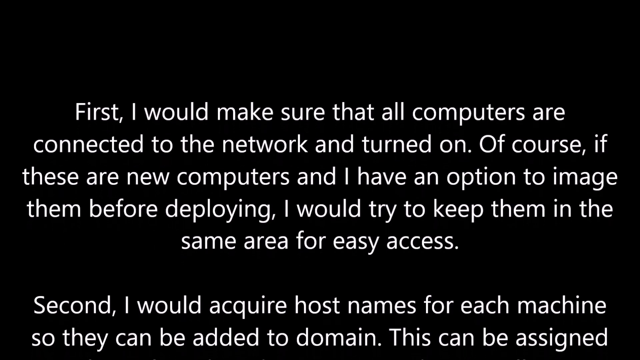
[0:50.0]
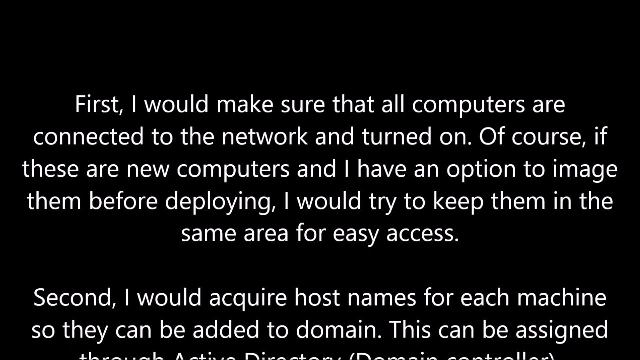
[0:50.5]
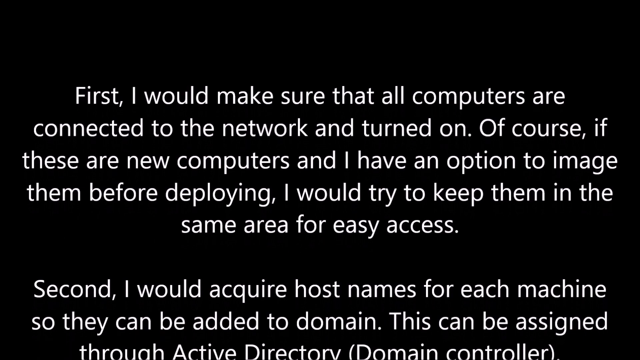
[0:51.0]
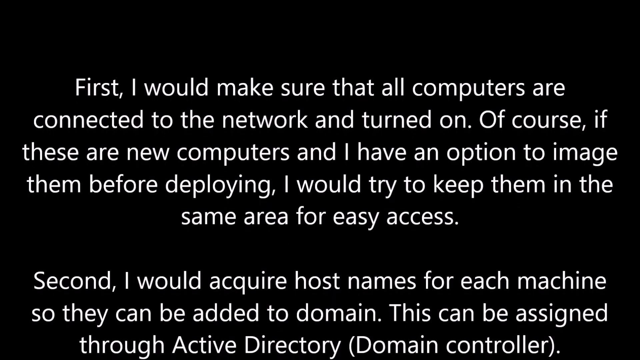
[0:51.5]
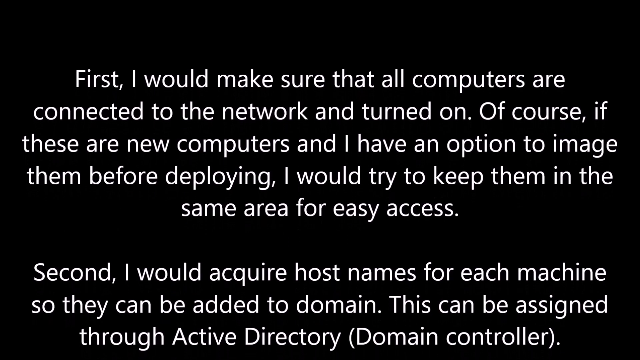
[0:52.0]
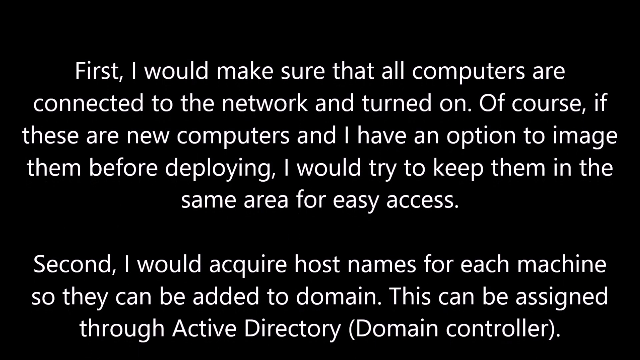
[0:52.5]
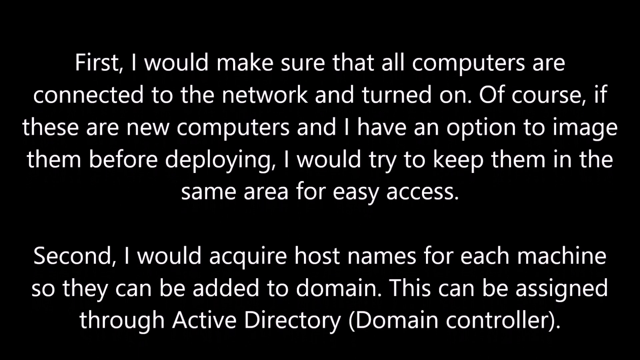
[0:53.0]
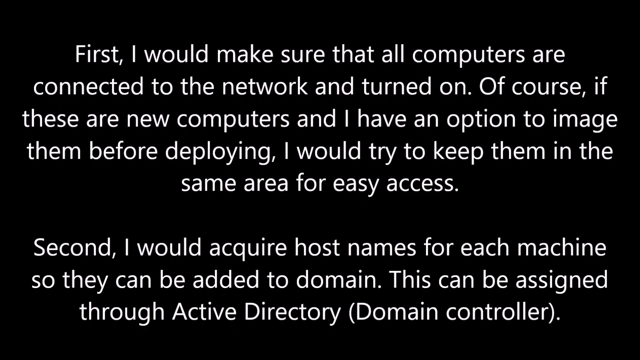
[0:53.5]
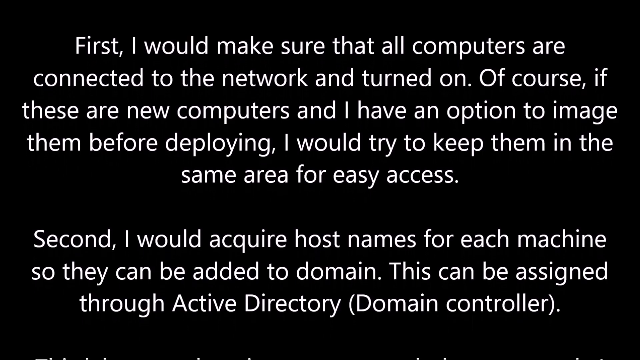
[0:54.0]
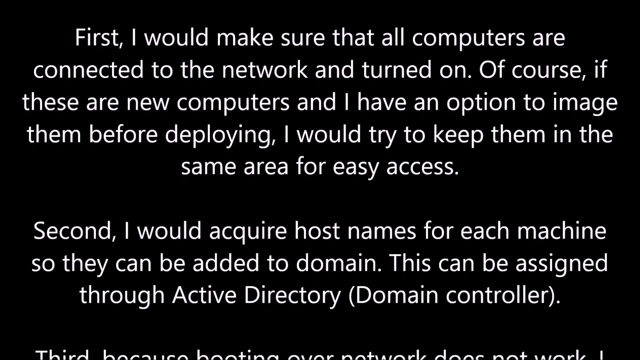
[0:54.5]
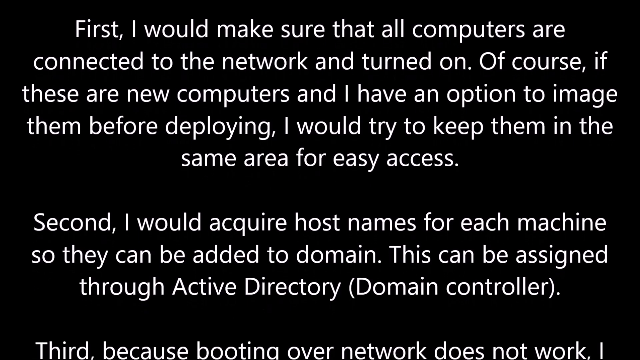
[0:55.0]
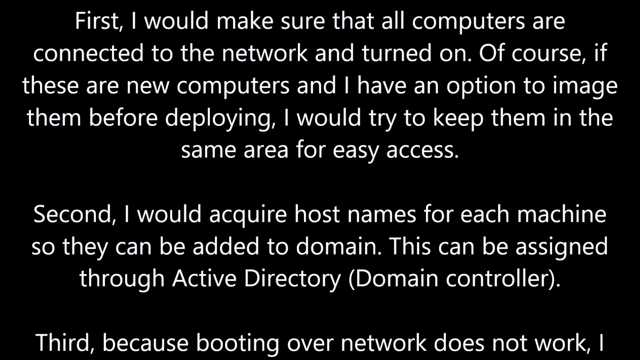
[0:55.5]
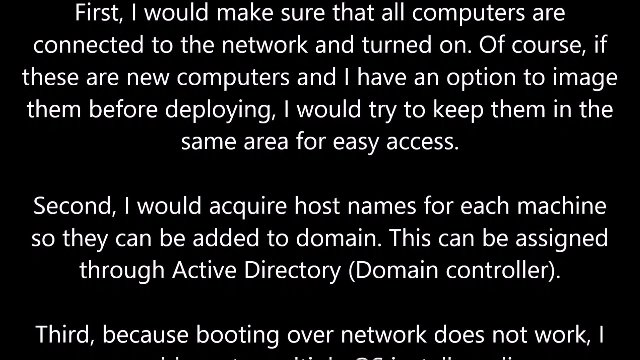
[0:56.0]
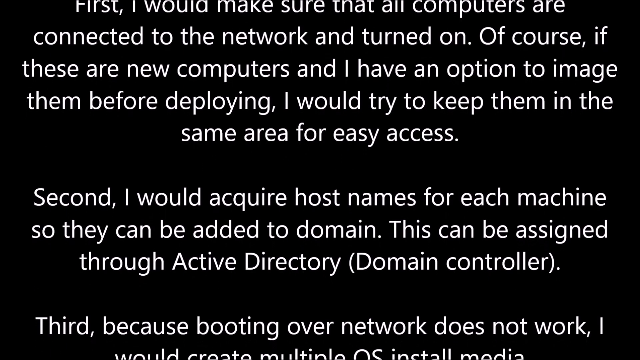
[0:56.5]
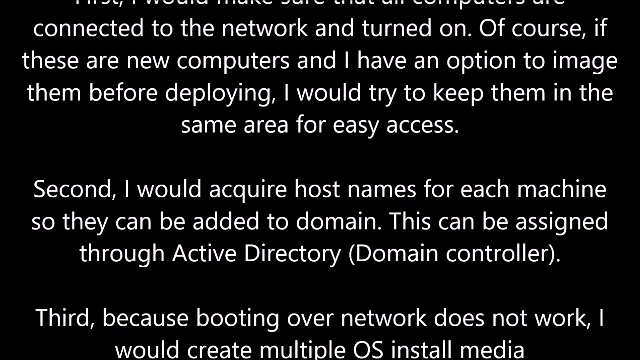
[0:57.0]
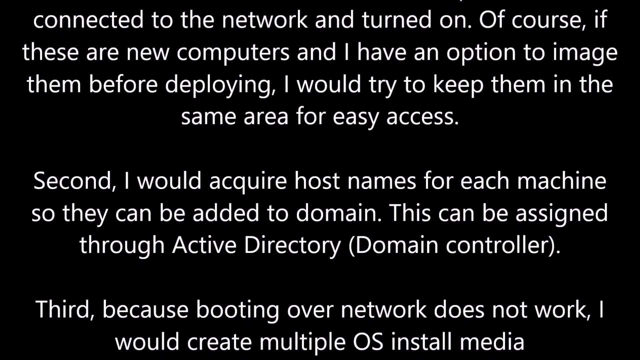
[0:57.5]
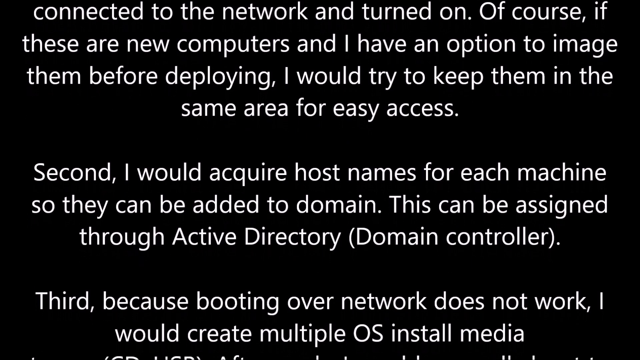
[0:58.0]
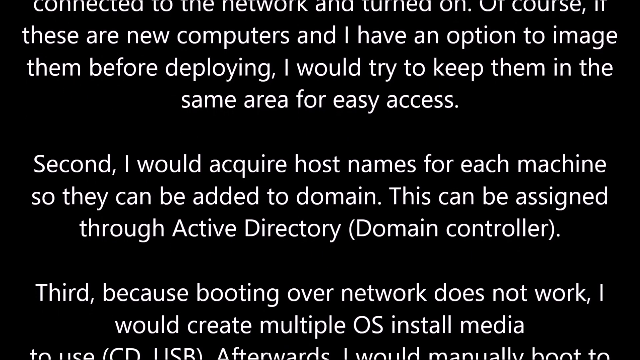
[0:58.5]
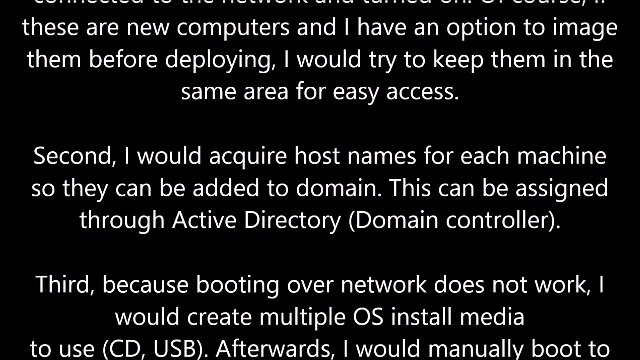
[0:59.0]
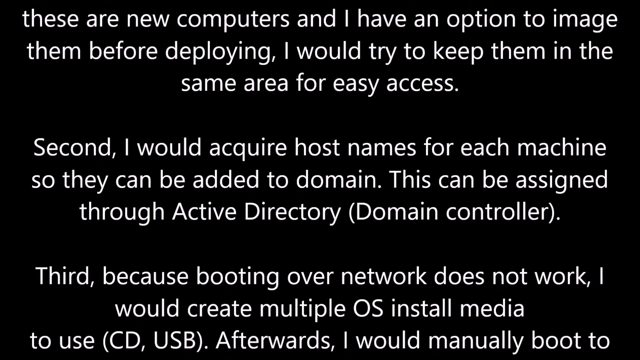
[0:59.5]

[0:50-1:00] White text scrolls slowly upwards from the bottom, answering a question about how to install an OS on a lot of computers. It states that it would "first make sure all computers are connected to the network and turned on. Of course, if these are new computers and I have an option to image them before deploying, I would try to keep them in the same area for easy access." As the text scrolls up, a second point is revealed: "Second, I would acquire hostnames for each machine so they can be added to domain. This can be assigned through Active Directory (Domain Controller)." Toward the end, a third point is partially revealed, reading "Third, because booting over network does not work I would create multiple OS install media," before the text is cut off.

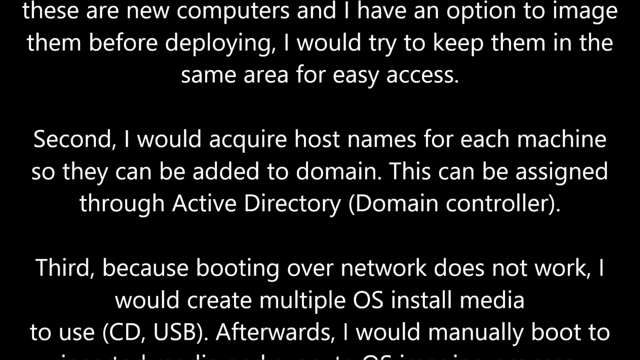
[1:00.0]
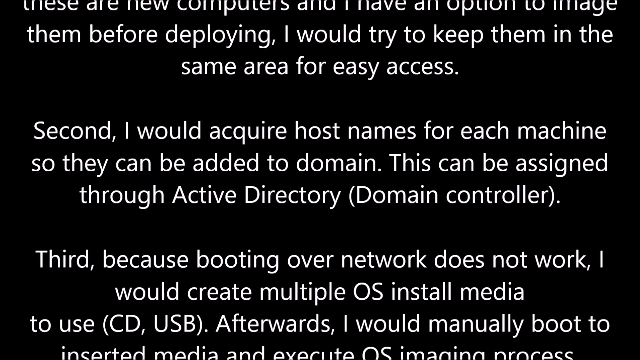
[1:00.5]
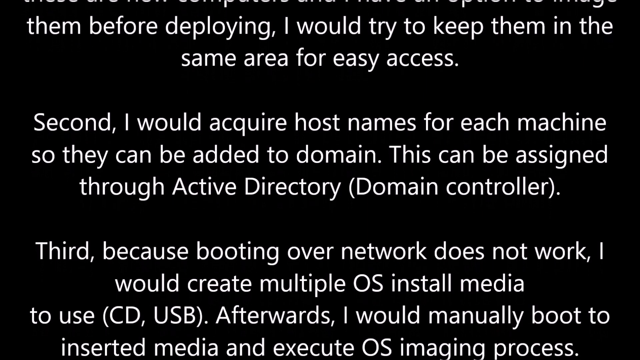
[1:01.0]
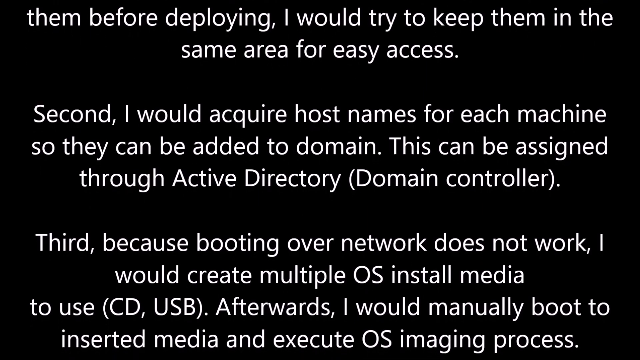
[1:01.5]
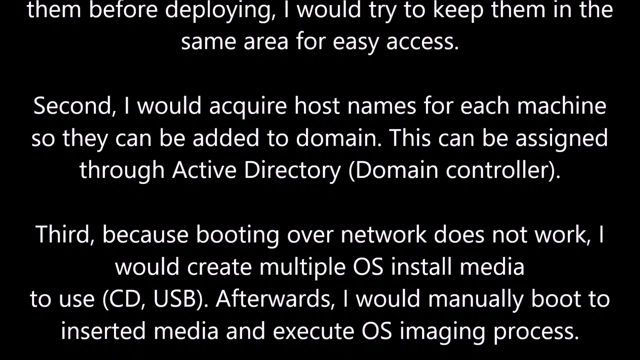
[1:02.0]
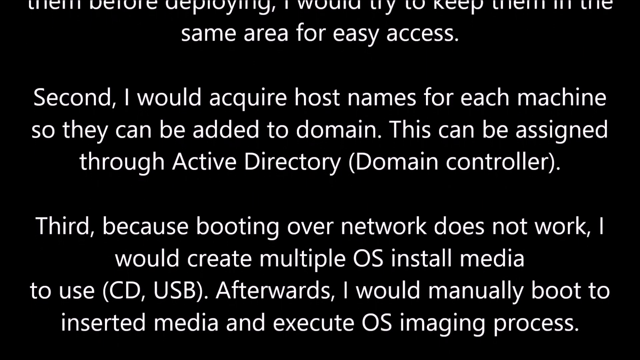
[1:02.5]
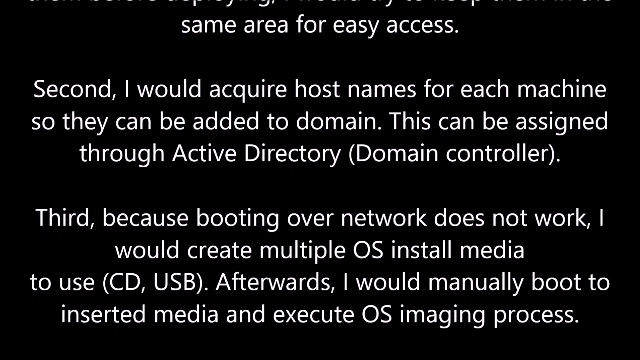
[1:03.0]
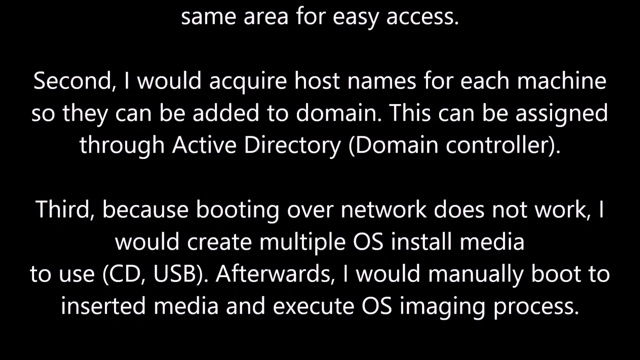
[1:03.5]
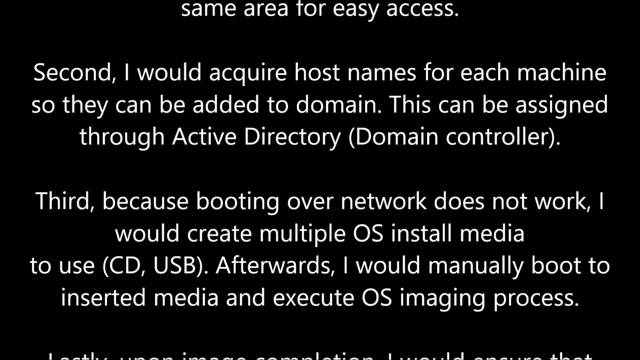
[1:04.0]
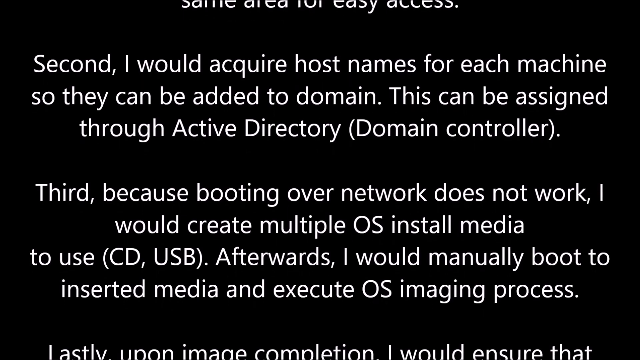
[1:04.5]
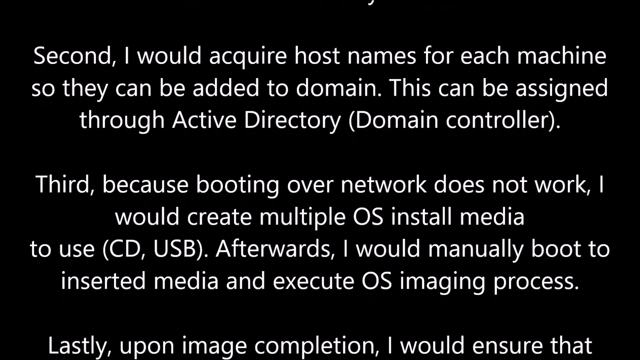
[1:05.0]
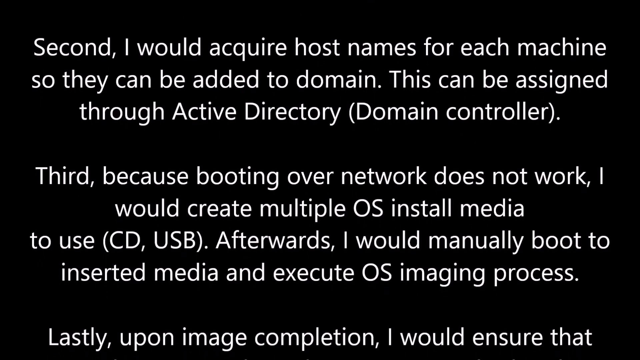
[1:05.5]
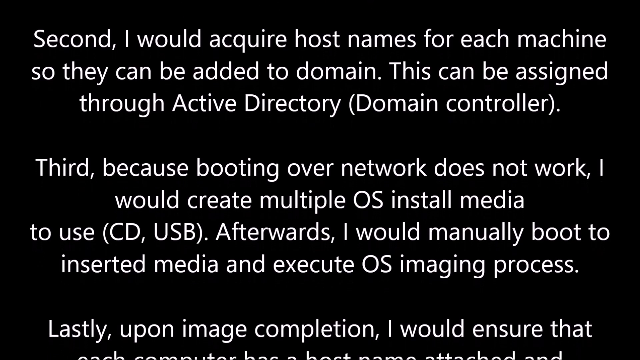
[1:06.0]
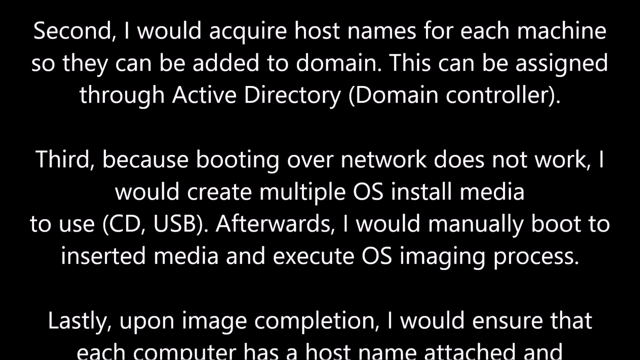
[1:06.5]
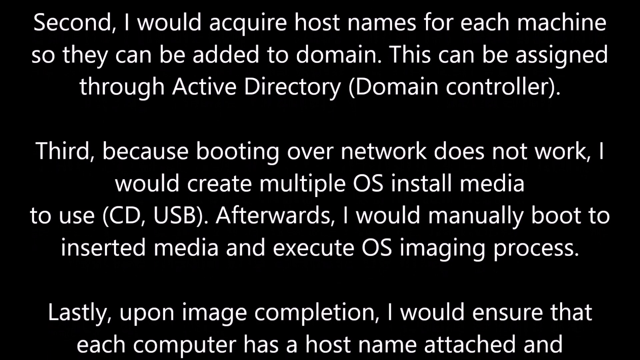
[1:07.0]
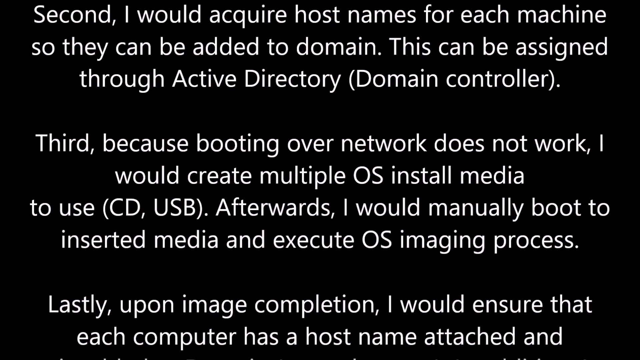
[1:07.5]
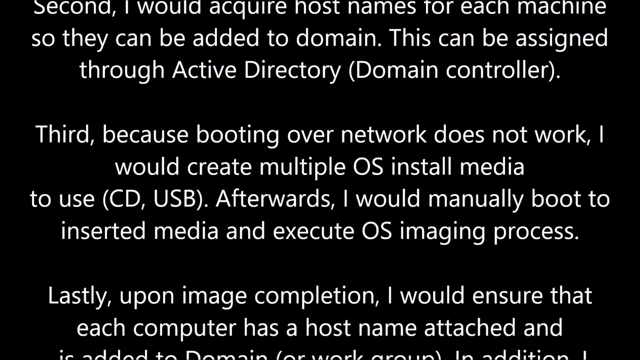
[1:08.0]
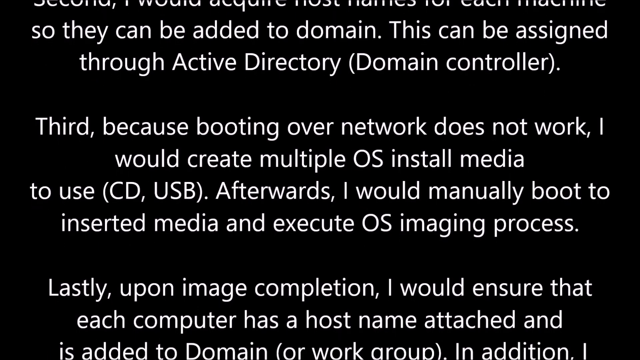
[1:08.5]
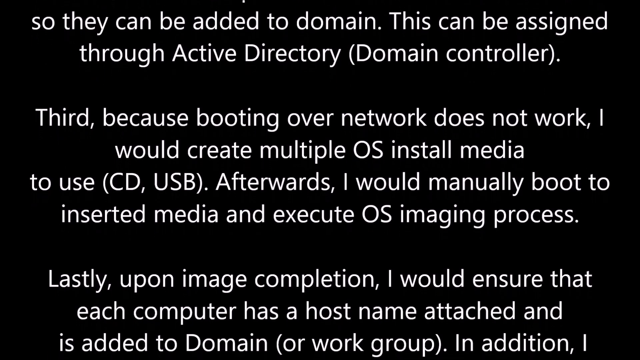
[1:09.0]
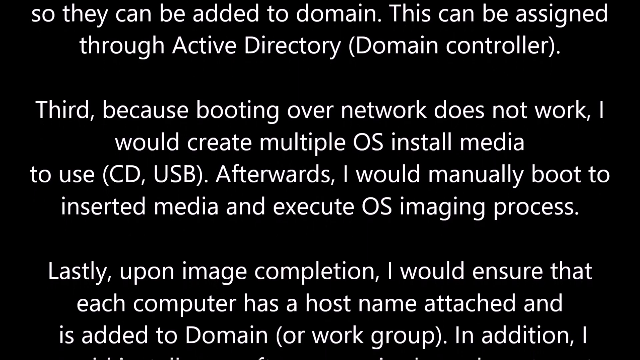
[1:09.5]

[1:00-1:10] Text in a plain white font scrolls slowly upwards from the bottom of the screen against a black background. Partial text reads "Then, before deploying, I would try to keep them in the same area for easy access." After a space, a second short paragraph reads "Second, I would acquire host names for each machine so they can be added to domain. This can be assigned through the Active Directory (Domain controller)." The text continues to scroll, revealing a third full short paragraph: "Third, because booting over network does not work, I would create multiple OS install media to use (CD,USB). Afterwards, I would manually boot to inserted media and execute the OS imaging process." It scrolls a little more to partially reveal another section reading "Lastly, upon image completion, I would ensure that each computer has a hostname attached," before the text is cut off.